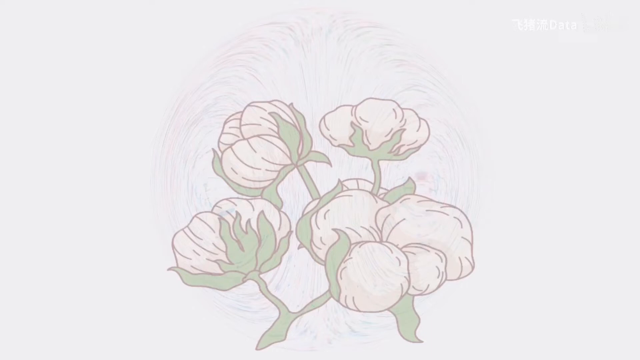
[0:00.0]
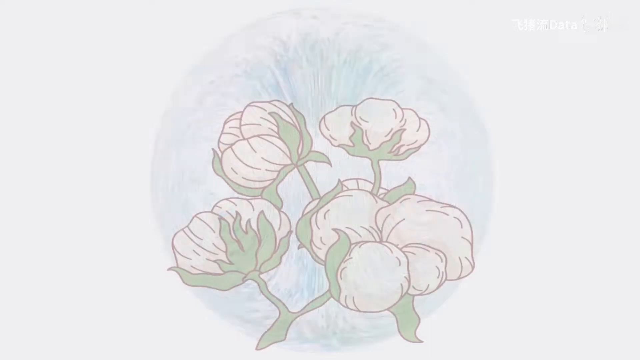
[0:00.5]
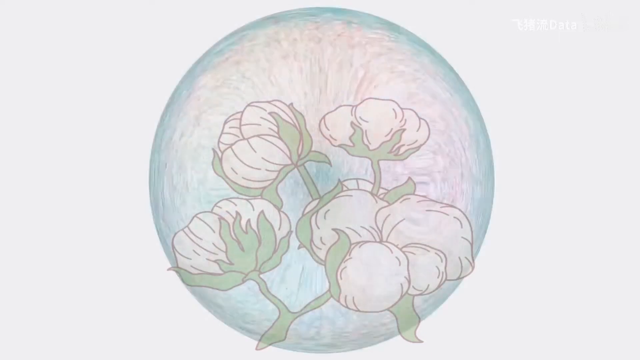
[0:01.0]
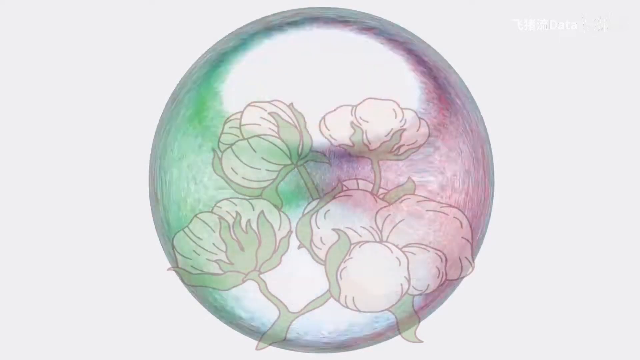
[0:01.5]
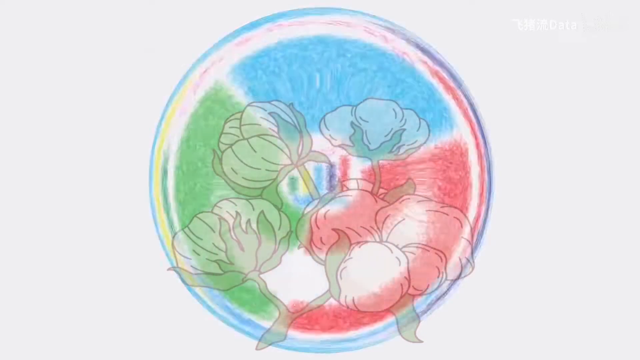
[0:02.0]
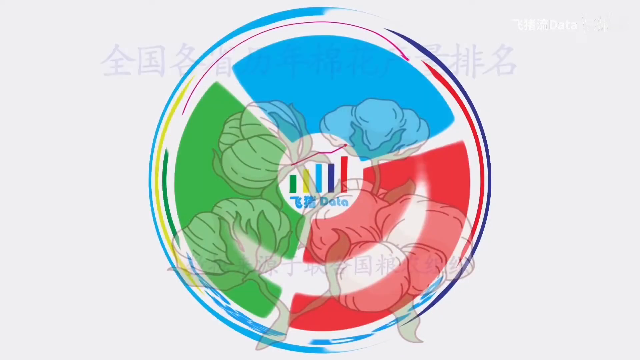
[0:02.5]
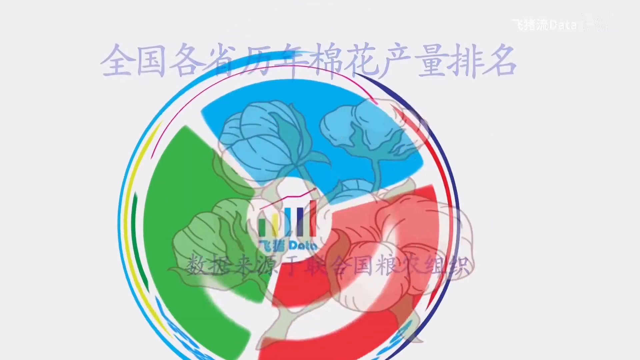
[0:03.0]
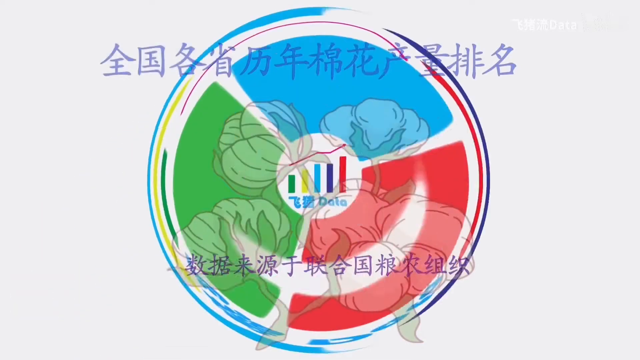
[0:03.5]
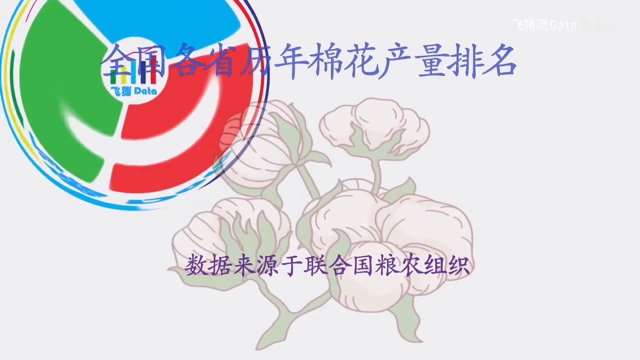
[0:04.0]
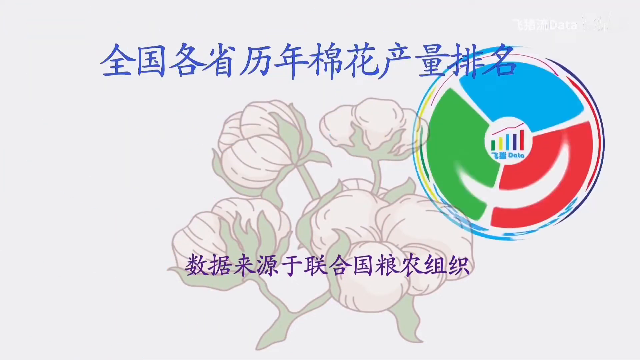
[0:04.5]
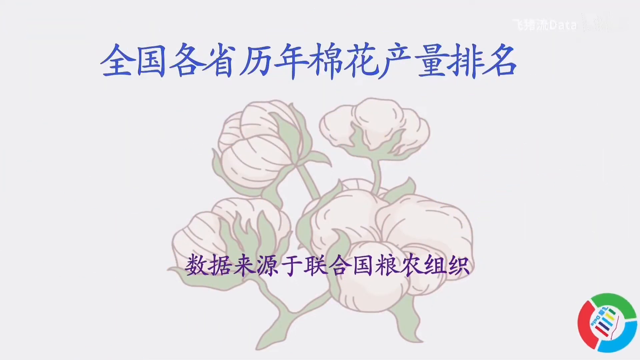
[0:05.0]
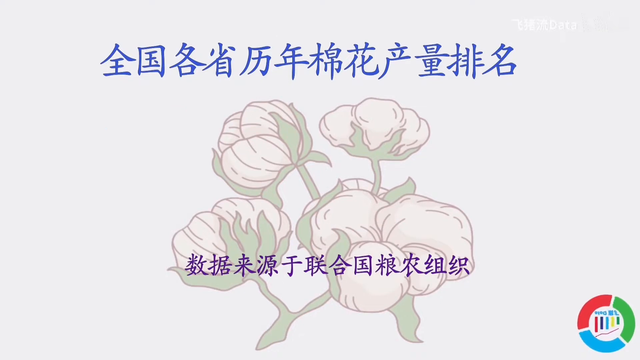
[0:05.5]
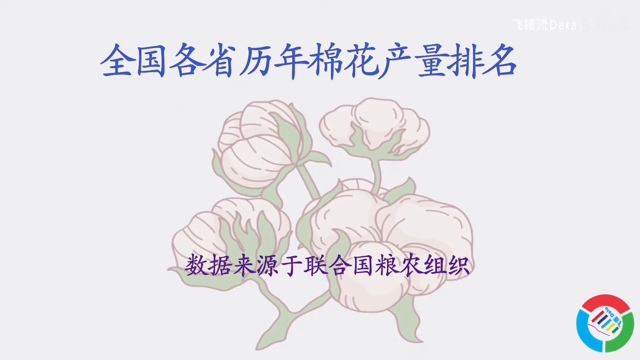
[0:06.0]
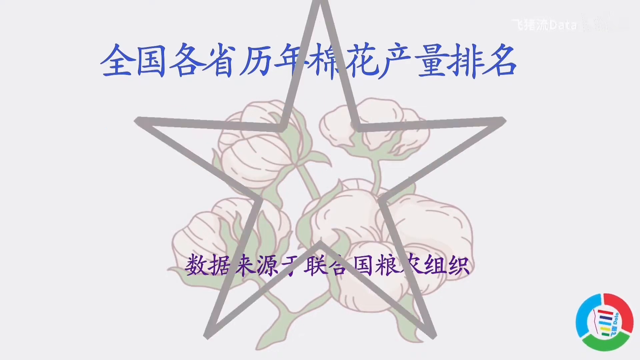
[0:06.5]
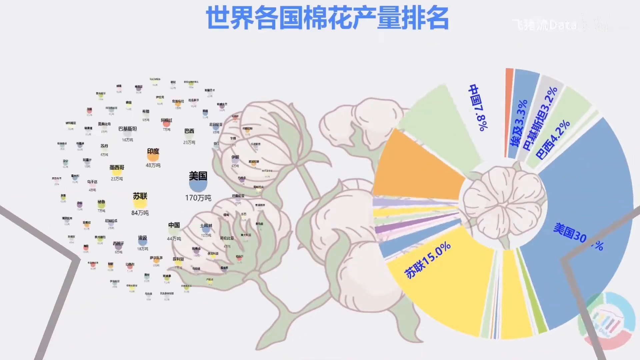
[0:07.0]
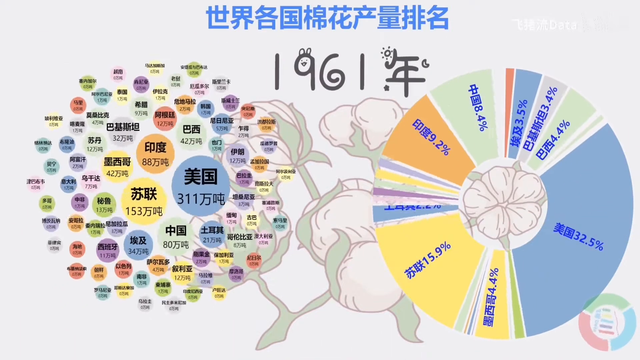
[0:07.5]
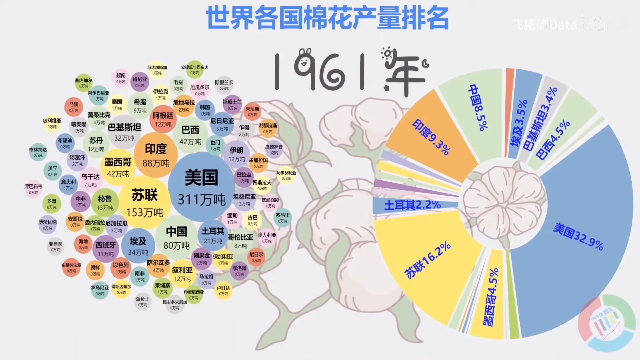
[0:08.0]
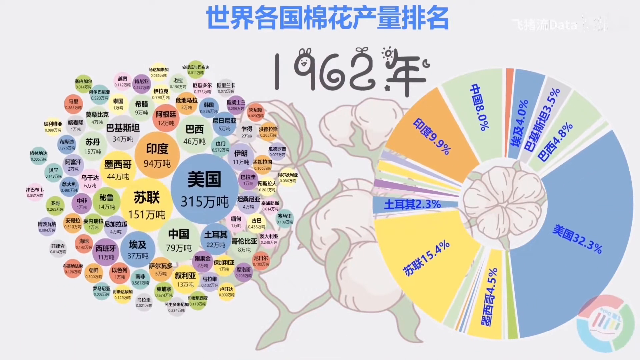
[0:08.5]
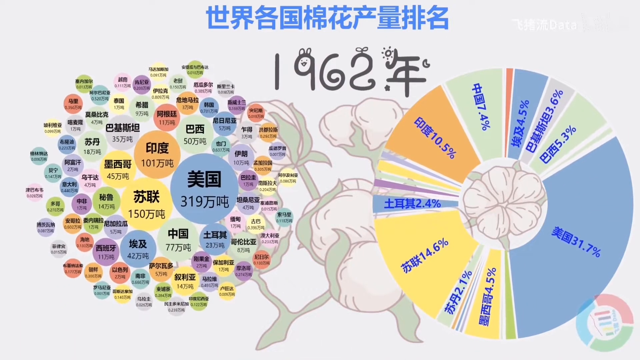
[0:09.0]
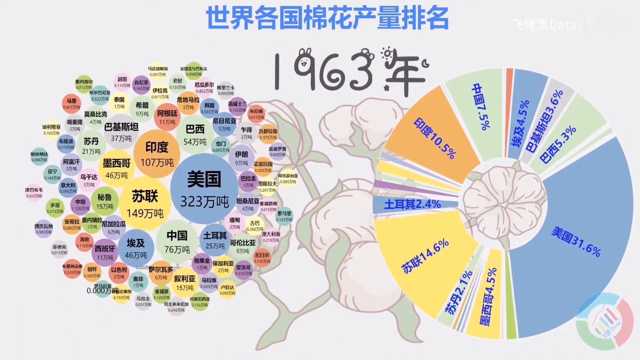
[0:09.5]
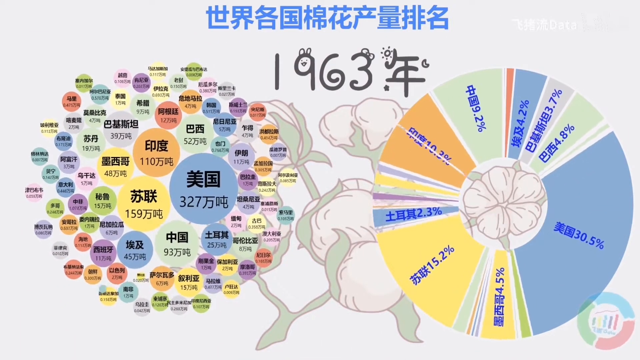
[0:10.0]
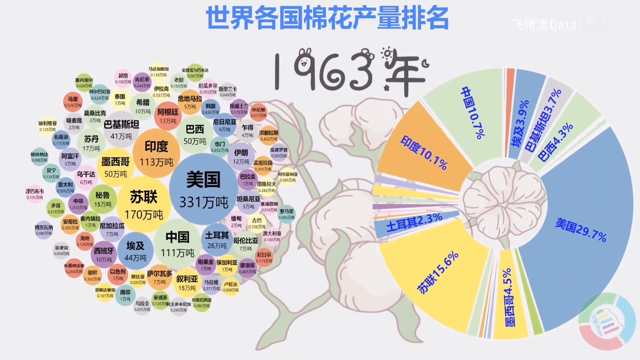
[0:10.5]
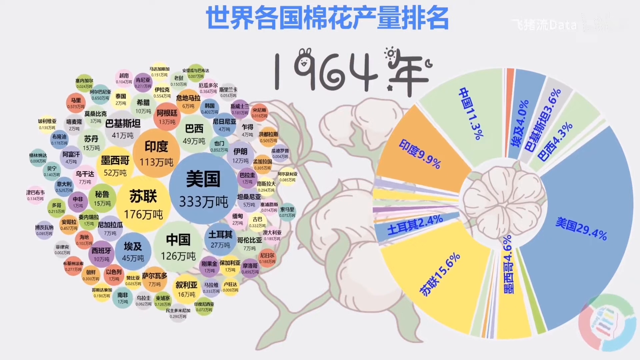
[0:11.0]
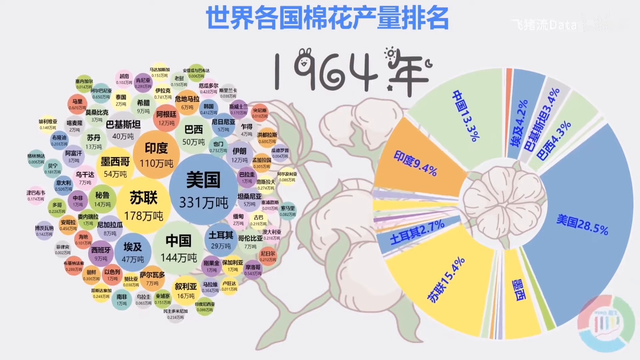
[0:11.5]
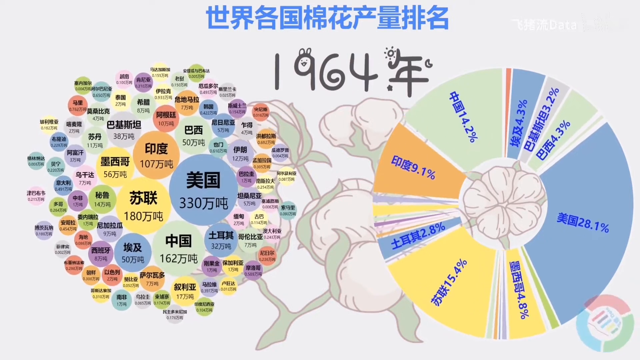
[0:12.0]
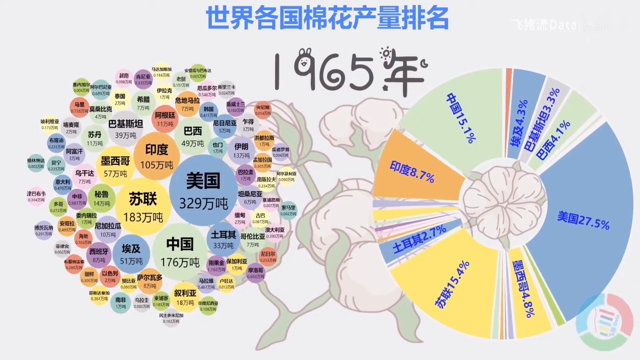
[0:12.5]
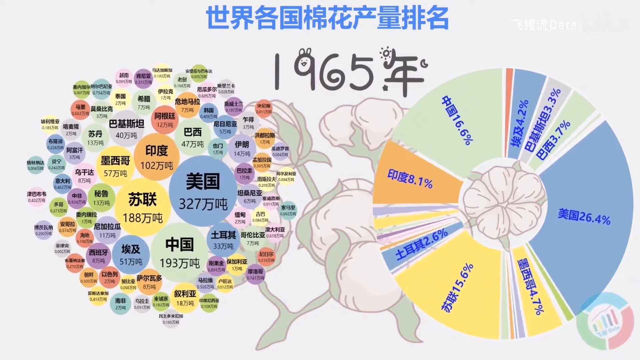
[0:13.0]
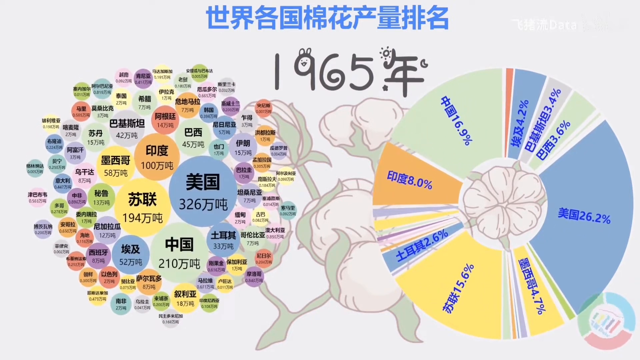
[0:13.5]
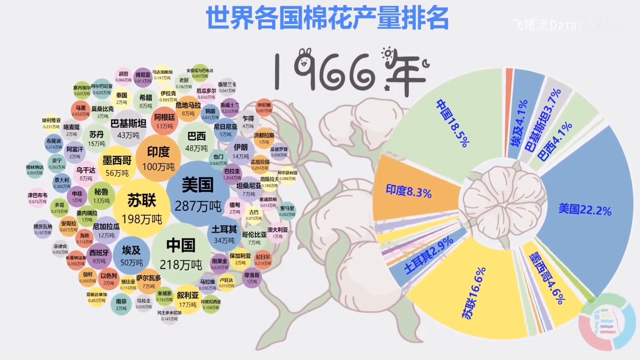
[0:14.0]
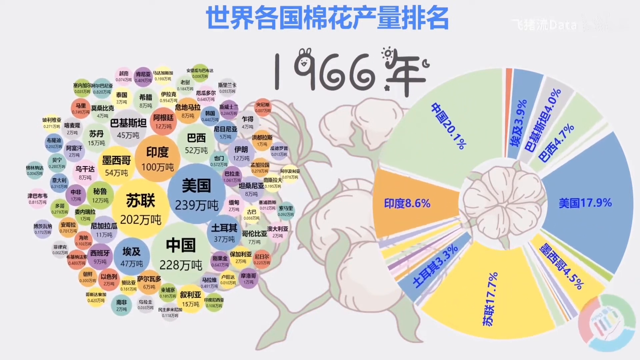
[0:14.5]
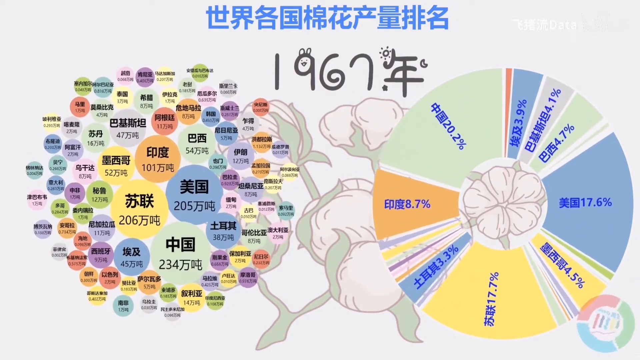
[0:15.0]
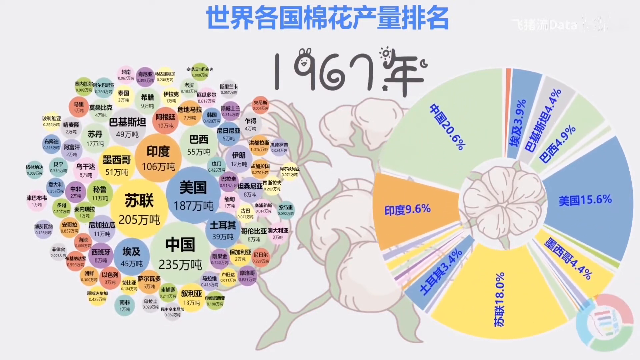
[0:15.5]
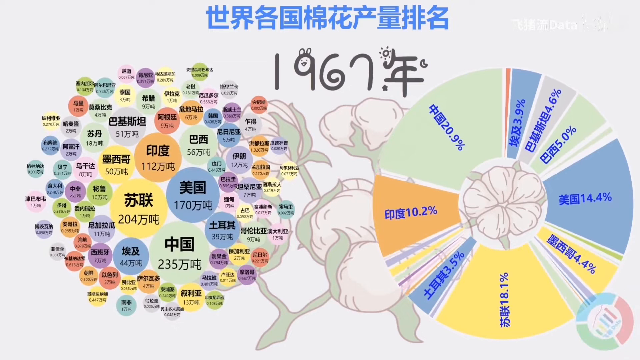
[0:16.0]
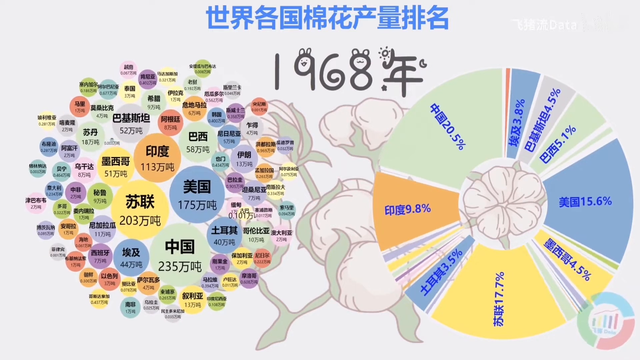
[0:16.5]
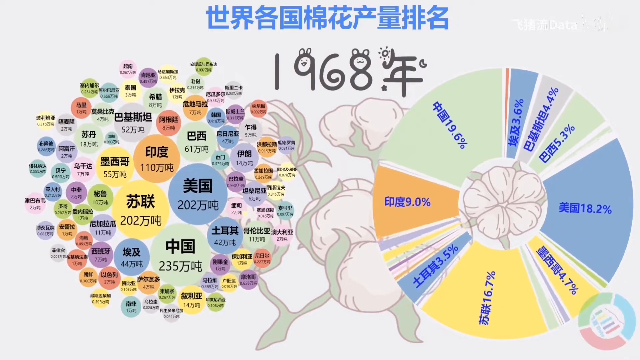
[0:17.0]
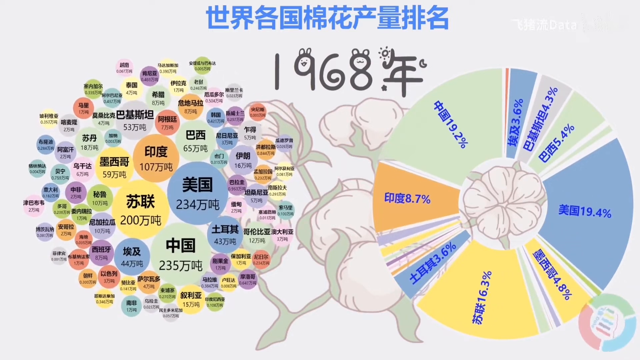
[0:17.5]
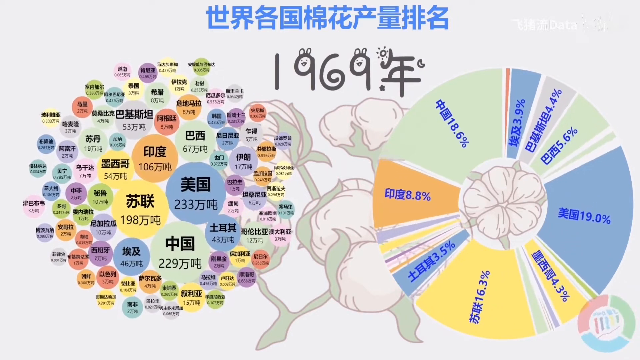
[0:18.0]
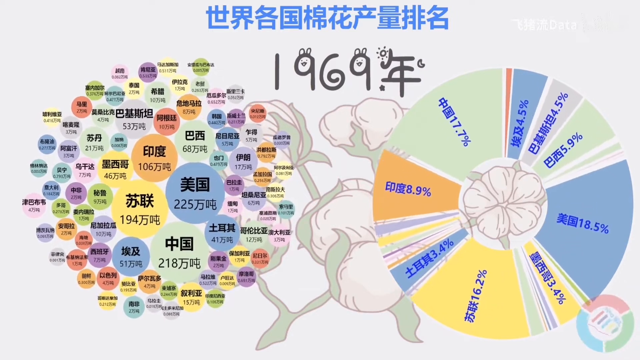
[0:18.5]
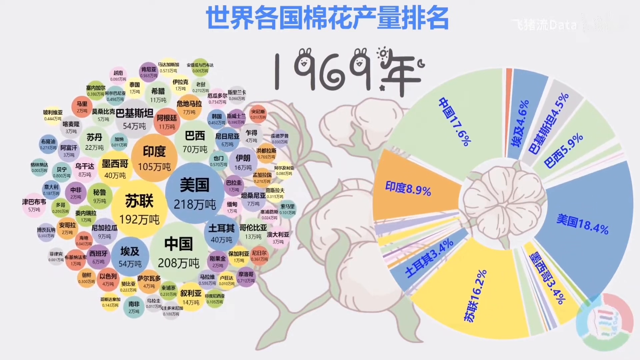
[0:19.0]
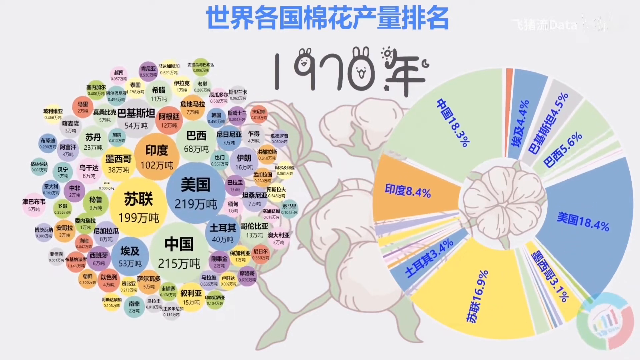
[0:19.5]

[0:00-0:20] An illustration shows a bunch of four flowers drawn with a grey line, with white and pink petals and green stems; they look somewhat like peonies, but they are cotton flowers. A large gray star appears on the screen, followed by a row of Chinese text in blue at the top and a smaller row of text in purple at the bottom of the screen. Two charts then appear, one on the left and one on the right, with "1963" in the center. The pie chart on the right shows the production of cotton: America at 29.7%, China at 10.7% and Brazil at 4.3%. The bubble chart on the left shows the U.S. producing 3,320,000 units. All of the country names are written in Chinese.